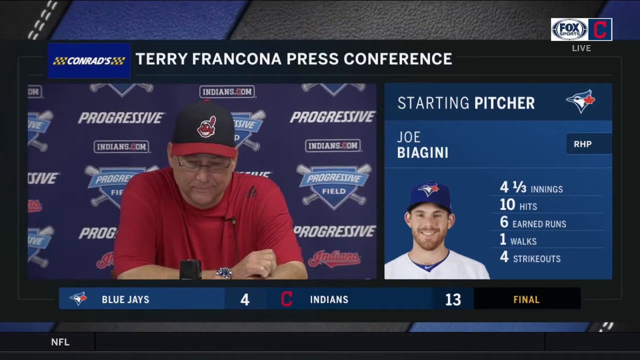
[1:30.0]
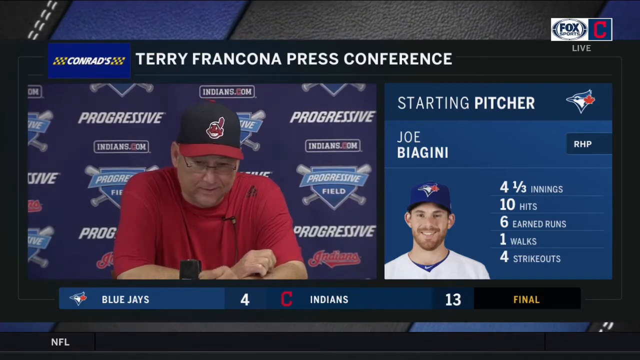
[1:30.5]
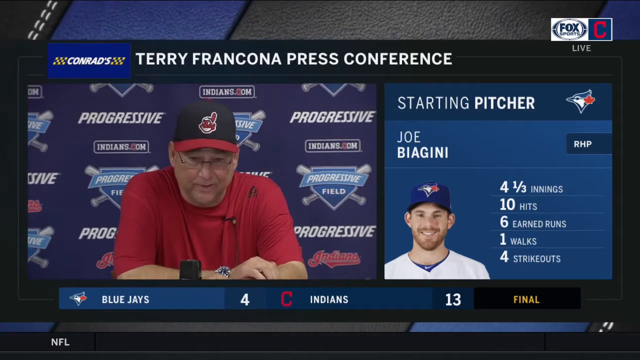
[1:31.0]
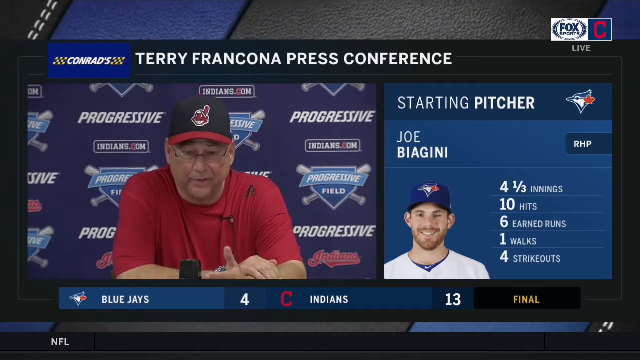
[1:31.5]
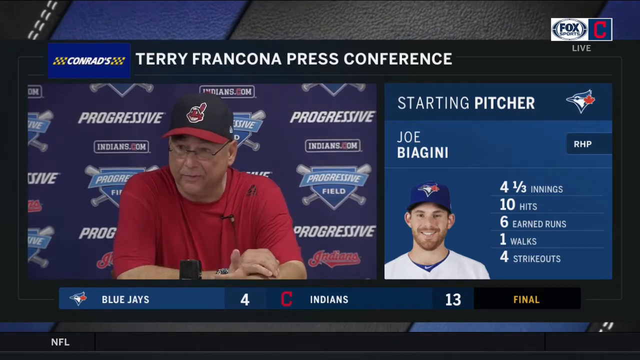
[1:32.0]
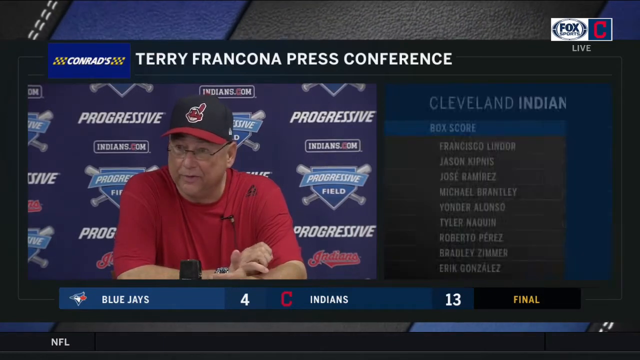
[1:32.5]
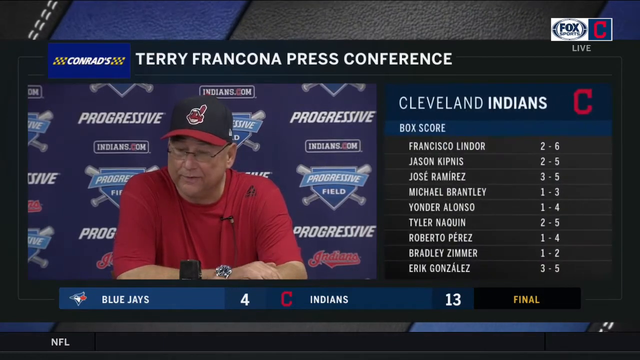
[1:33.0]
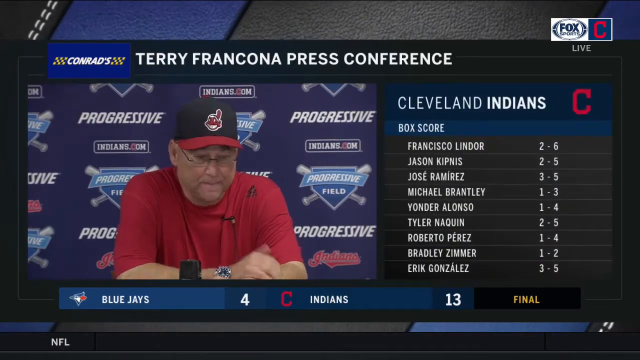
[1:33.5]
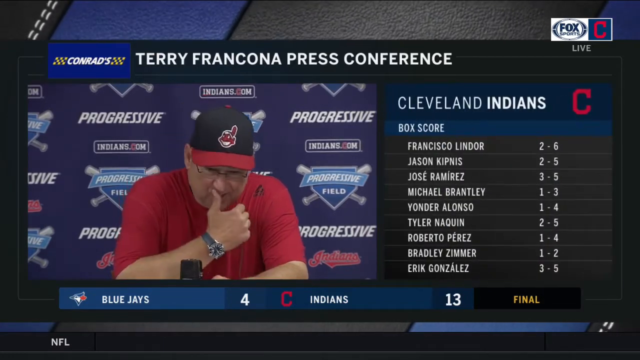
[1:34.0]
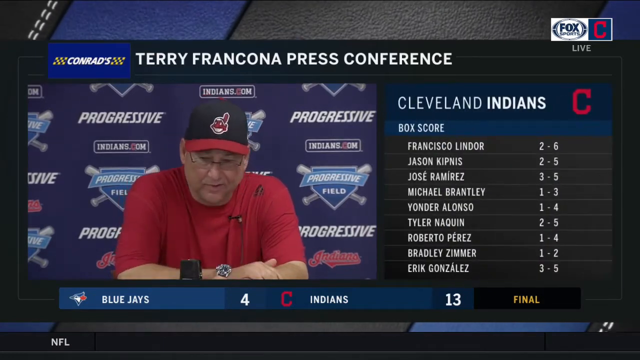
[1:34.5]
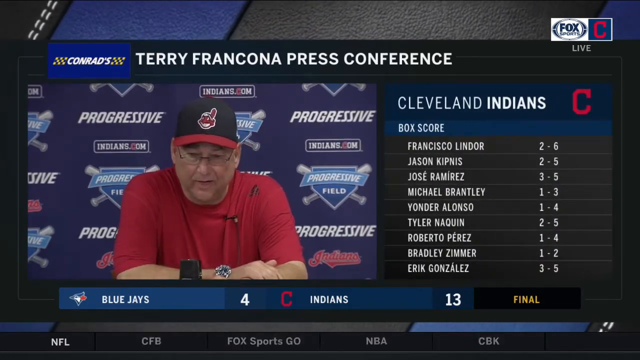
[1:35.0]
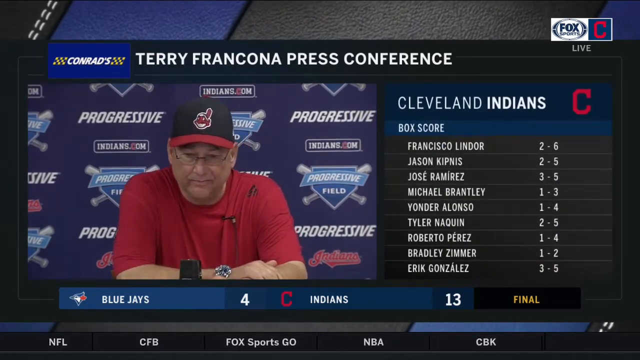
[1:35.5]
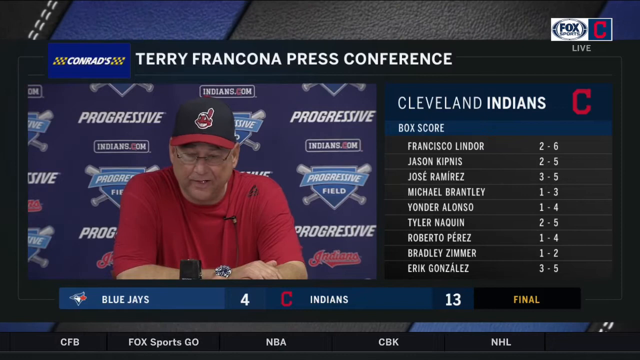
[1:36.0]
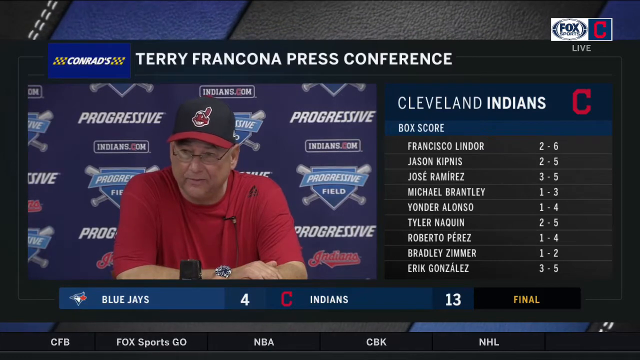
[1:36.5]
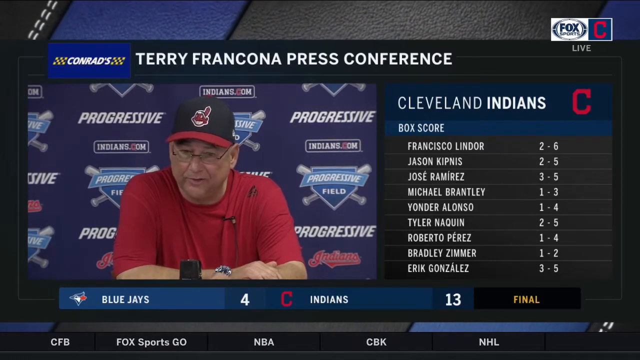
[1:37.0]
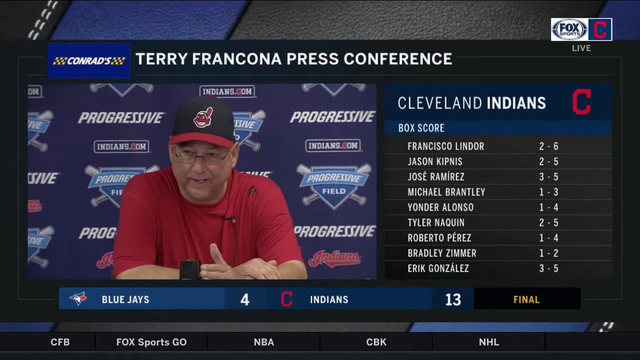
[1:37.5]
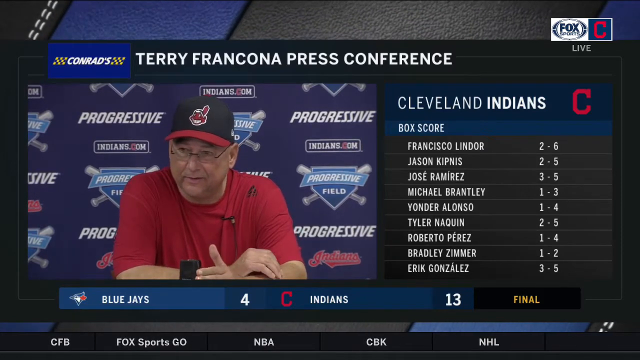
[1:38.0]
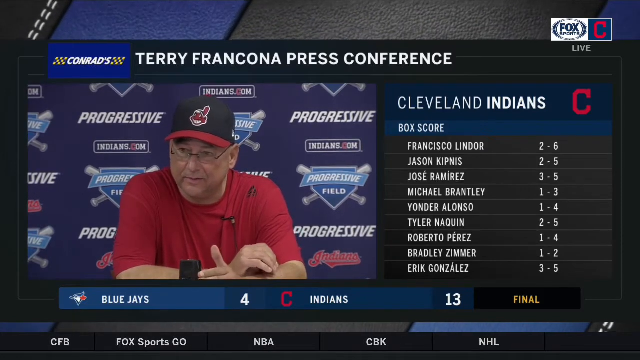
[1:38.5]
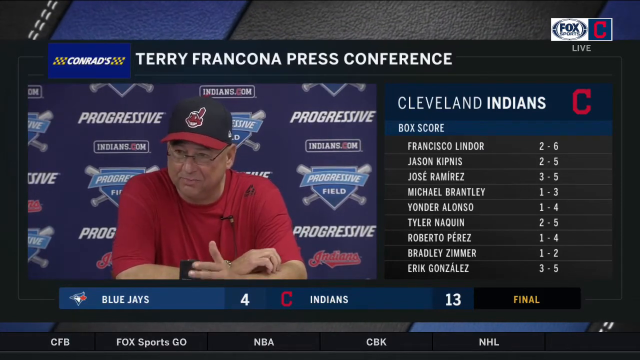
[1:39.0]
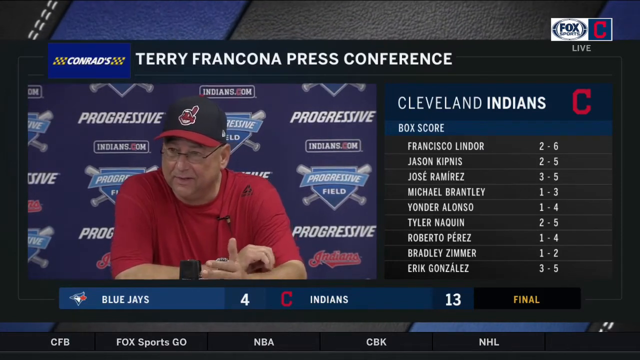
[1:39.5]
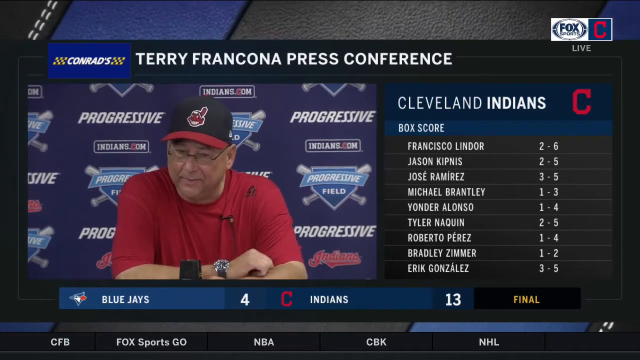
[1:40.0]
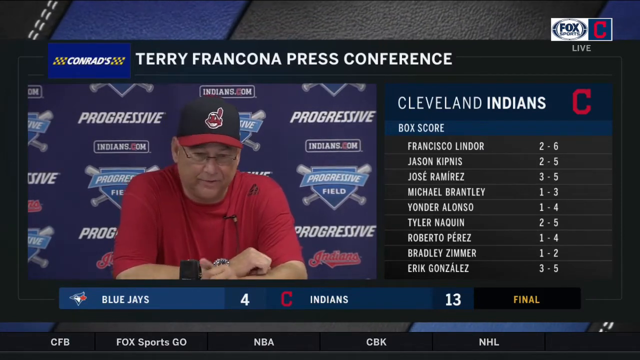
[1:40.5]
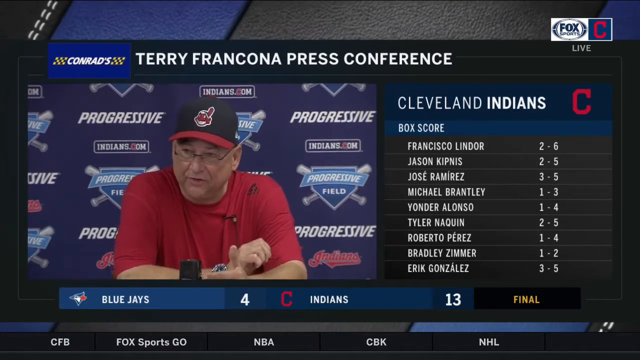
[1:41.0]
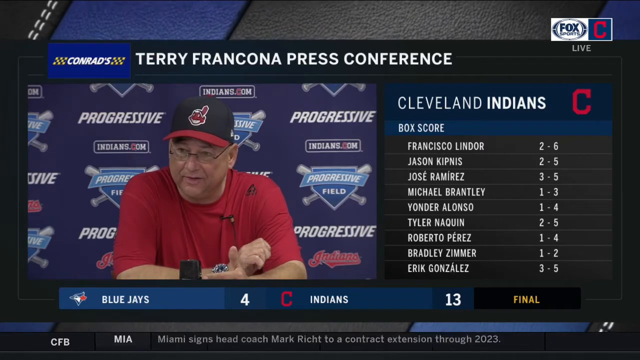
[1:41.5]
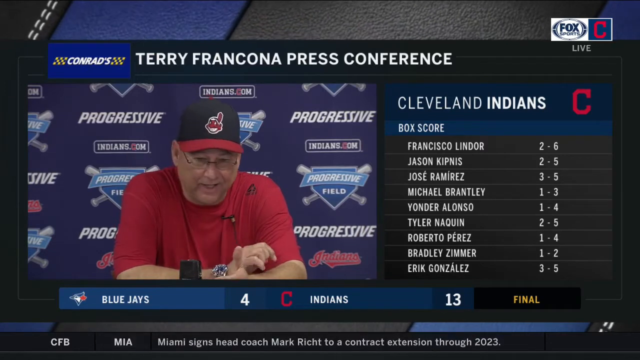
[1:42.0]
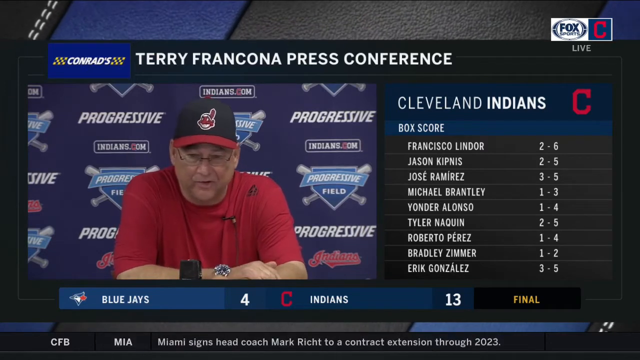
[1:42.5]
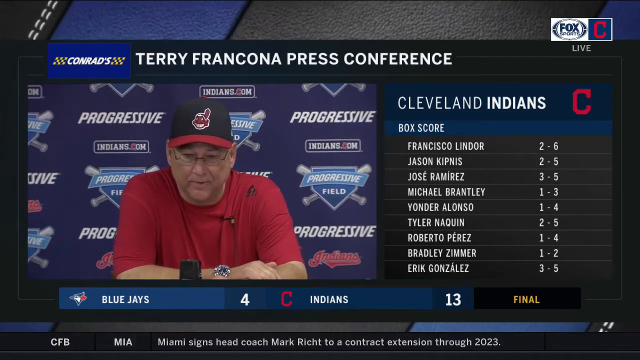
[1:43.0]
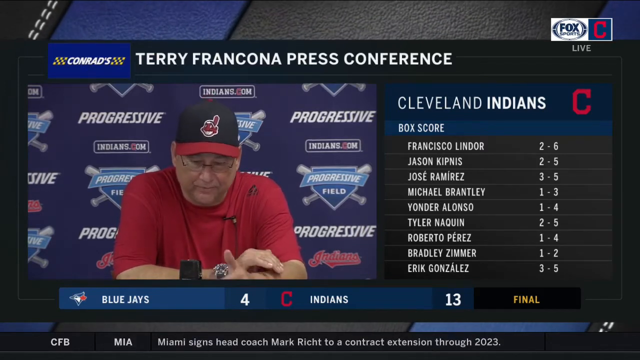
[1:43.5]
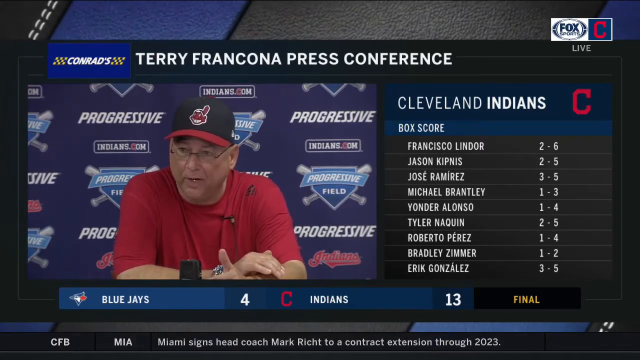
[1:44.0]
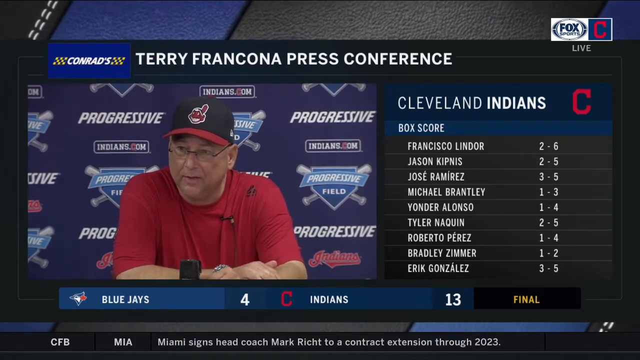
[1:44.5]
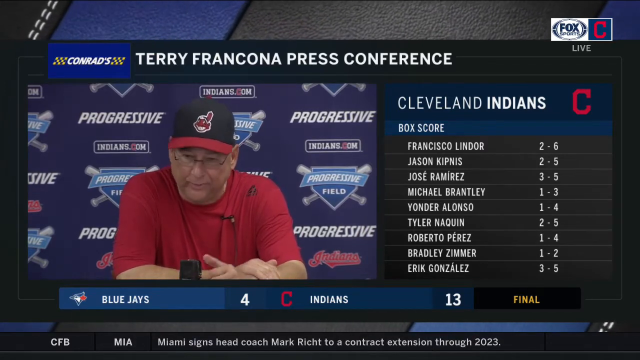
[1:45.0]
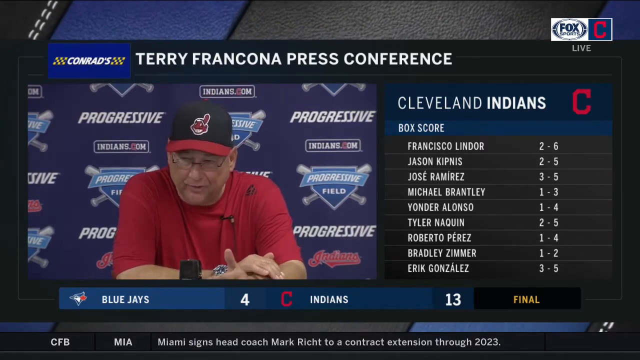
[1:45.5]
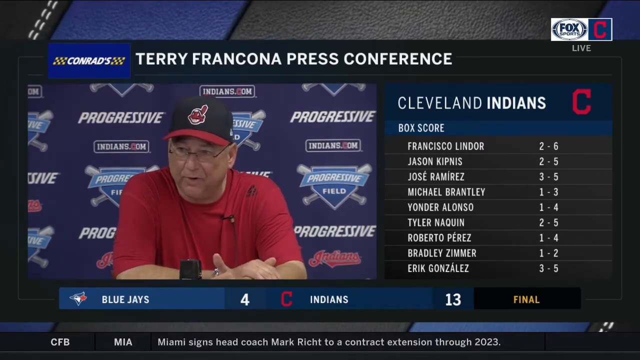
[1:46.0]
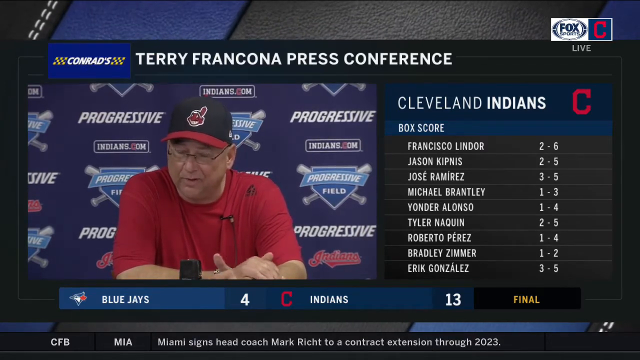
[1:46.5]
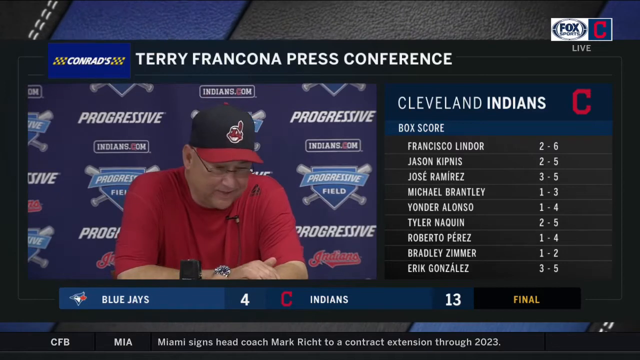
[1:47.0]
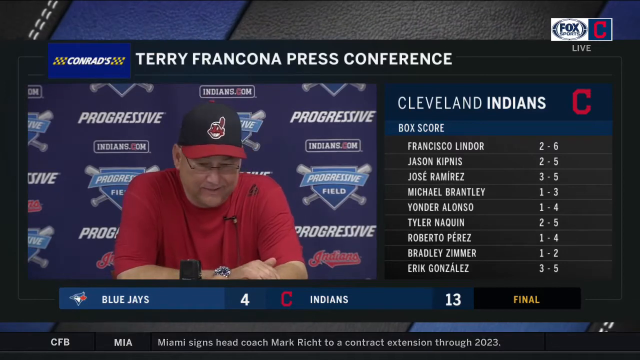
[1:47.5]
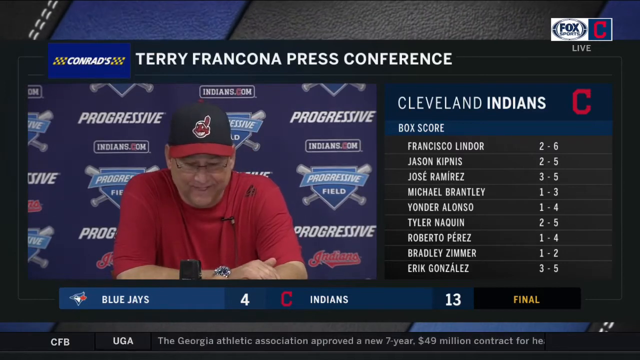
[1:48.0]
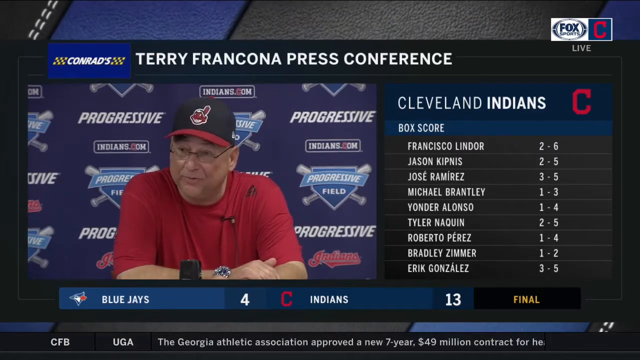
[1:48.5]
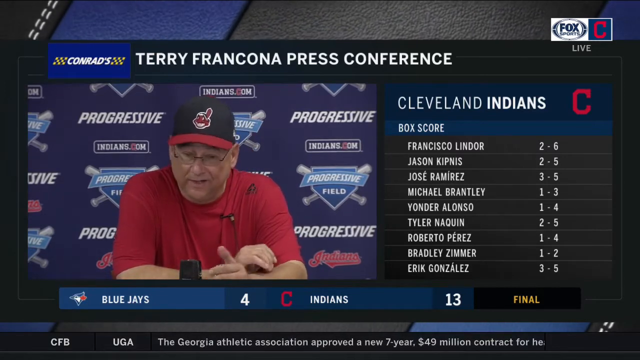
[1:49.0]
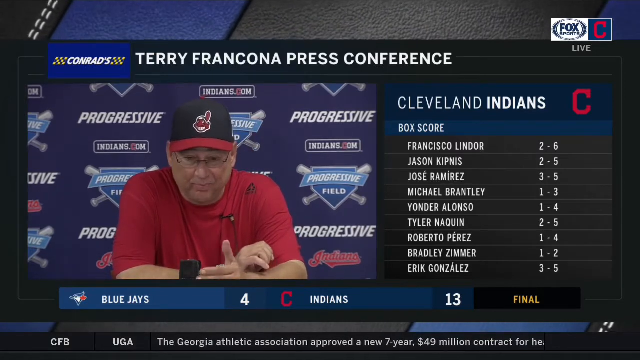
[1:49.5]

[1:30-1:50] The Francona press conference continues under its title. The man, apparently Terry Francona, speaks and turns his head toward the left side of the screen, which is actually his right, apparently answering and talking to someone such as a reporter in that section. On the right side the wording changes and the picture is removed, now showing "Cleveland Indians" and "box score" with names including Francisco Lindor, Jason Kipnis, Jose Ramirez, Michael Brantley, Yonder Alonzo and Tyler Naquin. At the bottom it says "final": Blue Jays 4, Indians 13.